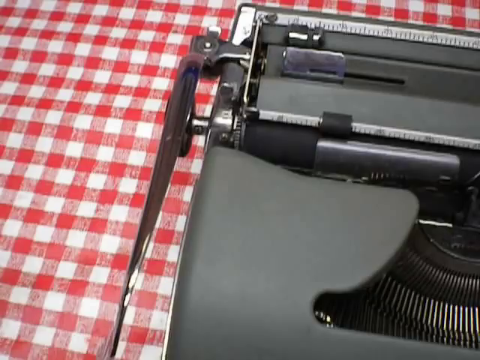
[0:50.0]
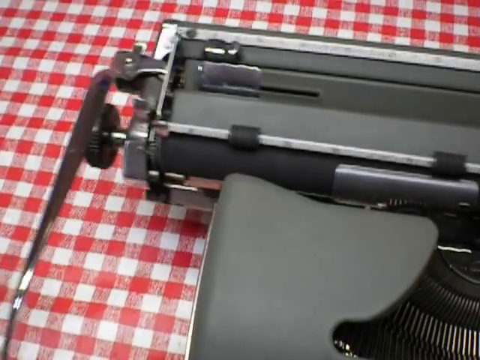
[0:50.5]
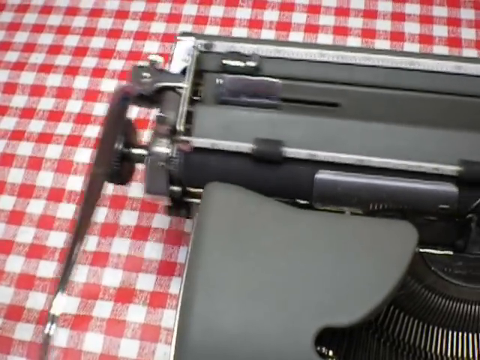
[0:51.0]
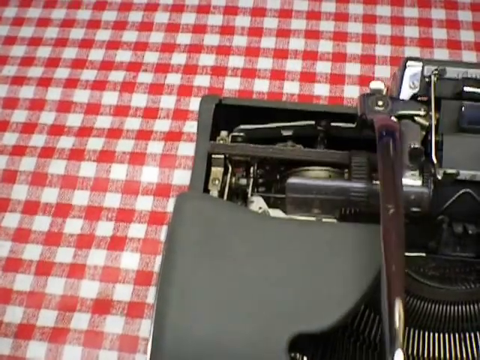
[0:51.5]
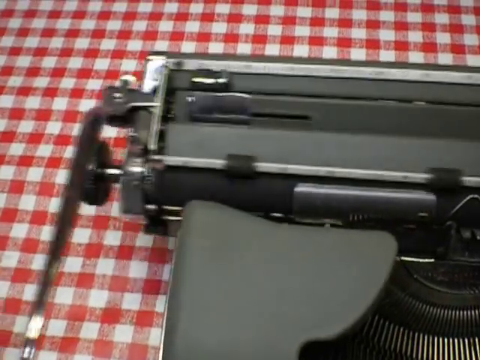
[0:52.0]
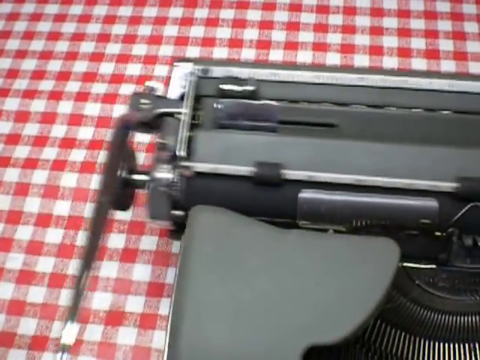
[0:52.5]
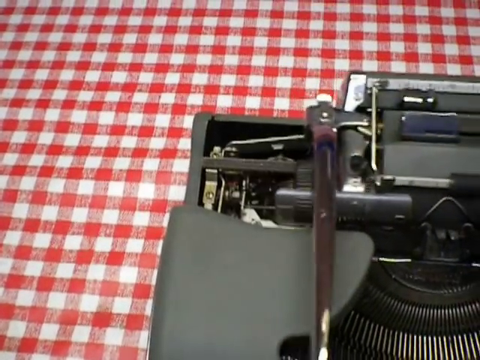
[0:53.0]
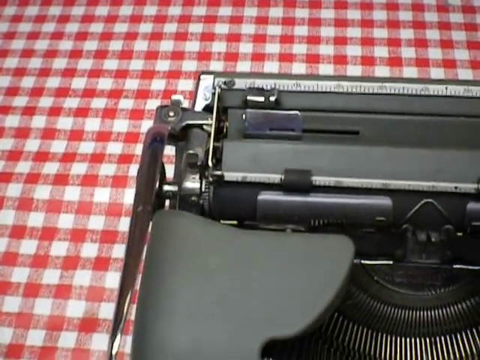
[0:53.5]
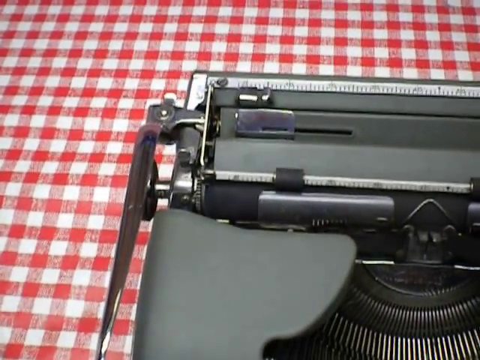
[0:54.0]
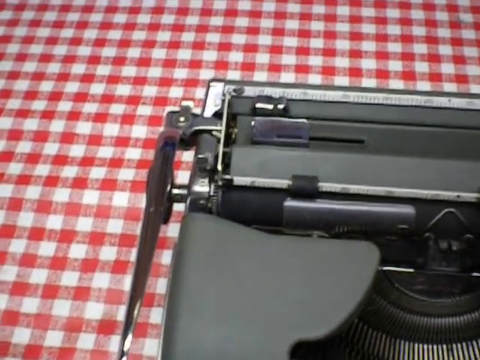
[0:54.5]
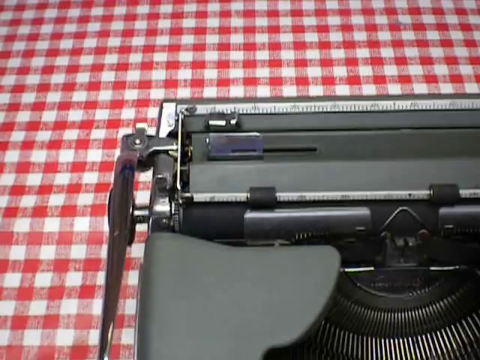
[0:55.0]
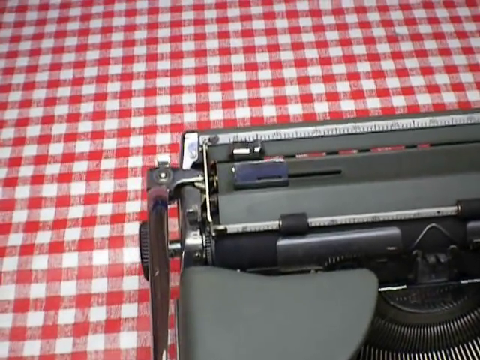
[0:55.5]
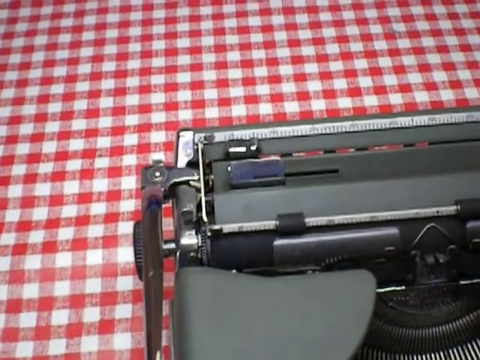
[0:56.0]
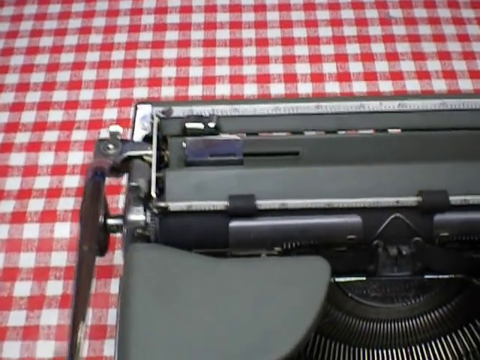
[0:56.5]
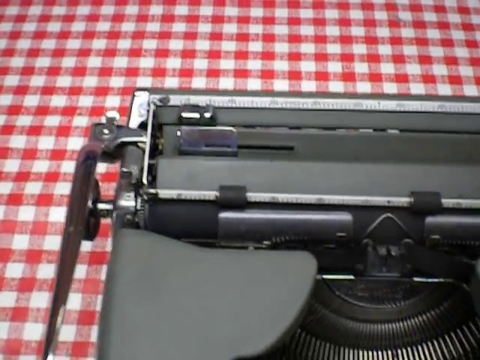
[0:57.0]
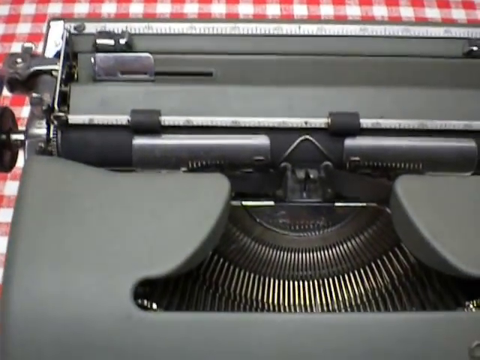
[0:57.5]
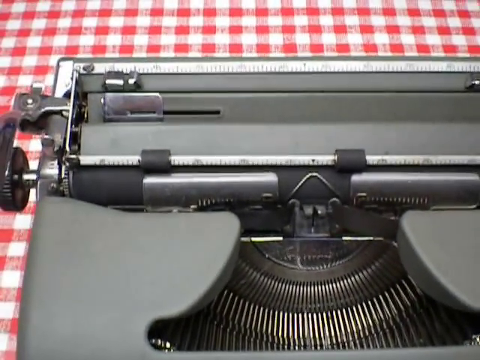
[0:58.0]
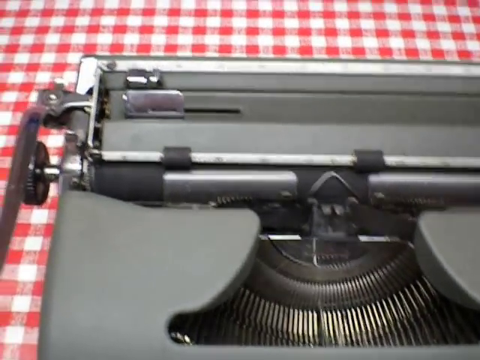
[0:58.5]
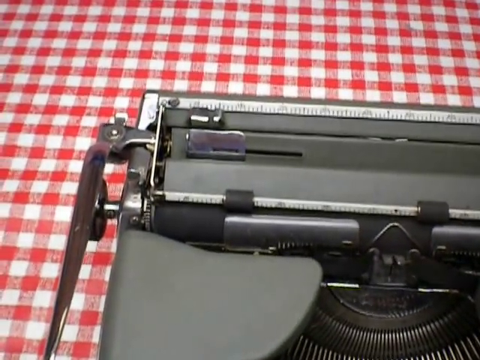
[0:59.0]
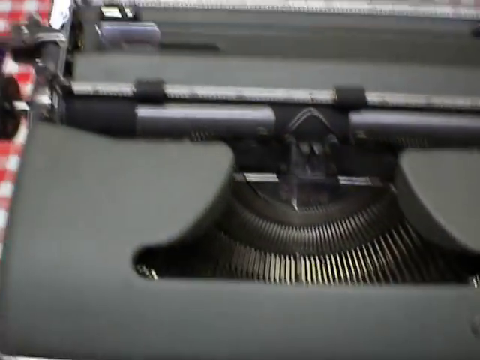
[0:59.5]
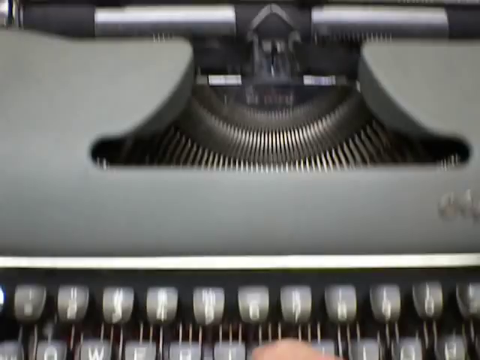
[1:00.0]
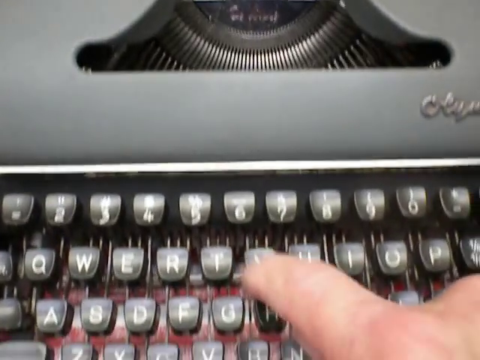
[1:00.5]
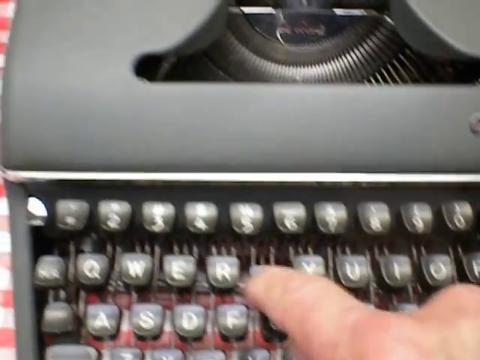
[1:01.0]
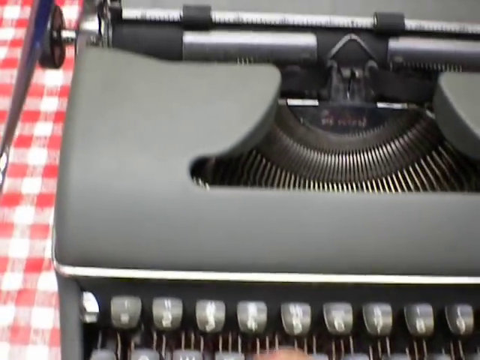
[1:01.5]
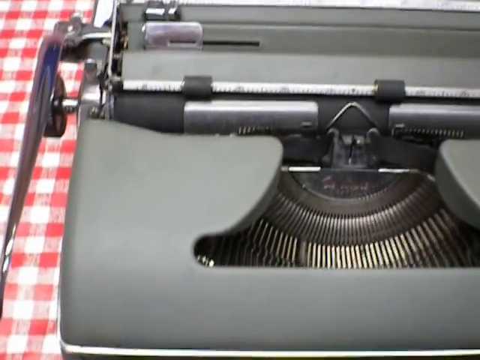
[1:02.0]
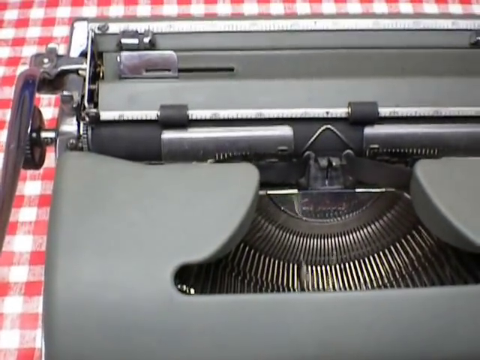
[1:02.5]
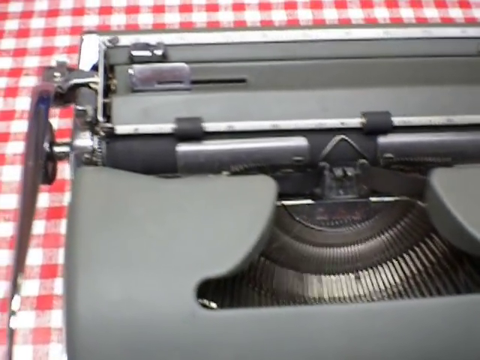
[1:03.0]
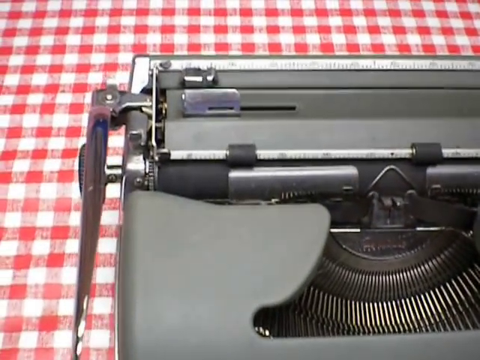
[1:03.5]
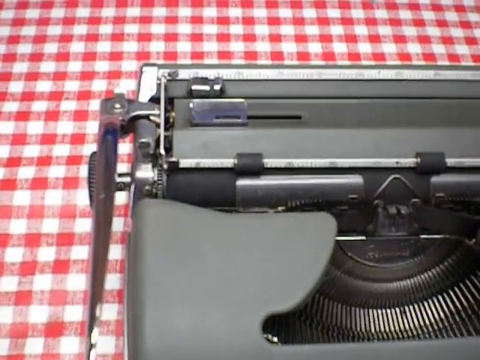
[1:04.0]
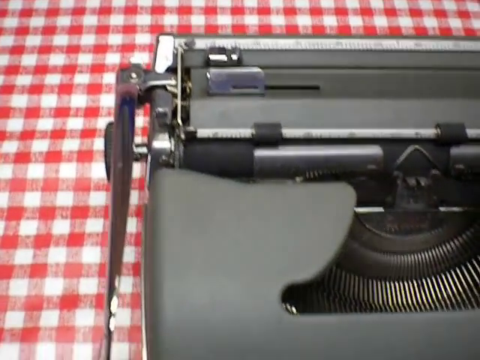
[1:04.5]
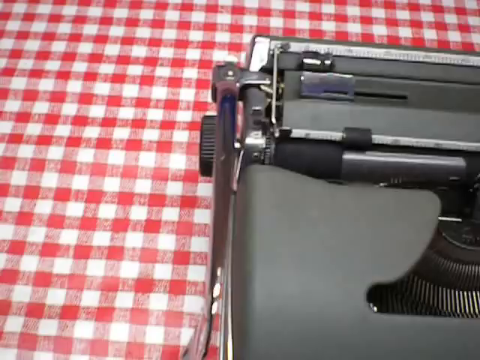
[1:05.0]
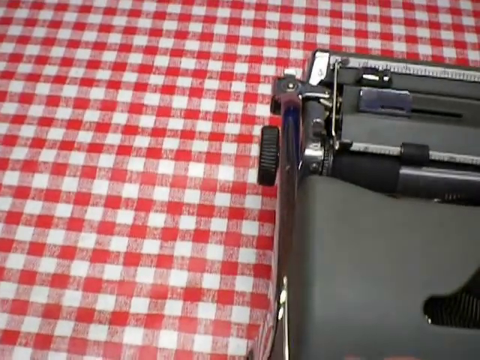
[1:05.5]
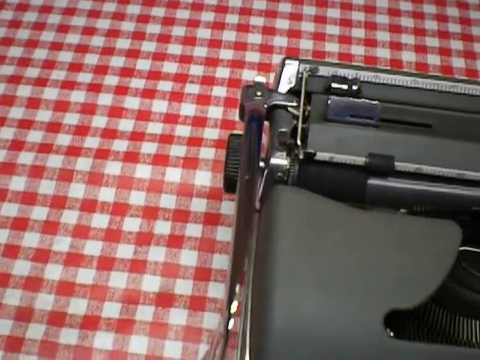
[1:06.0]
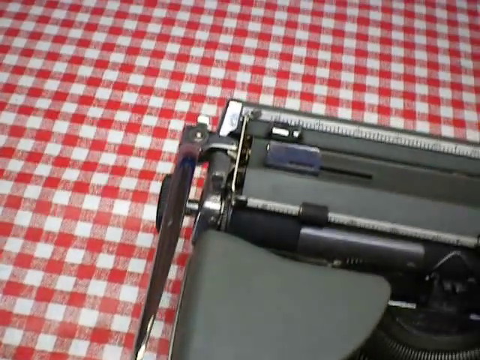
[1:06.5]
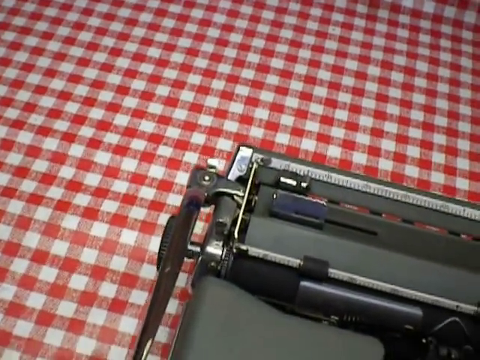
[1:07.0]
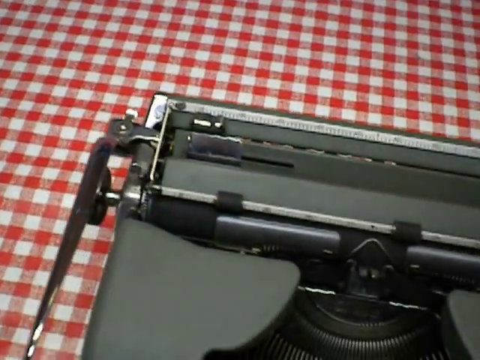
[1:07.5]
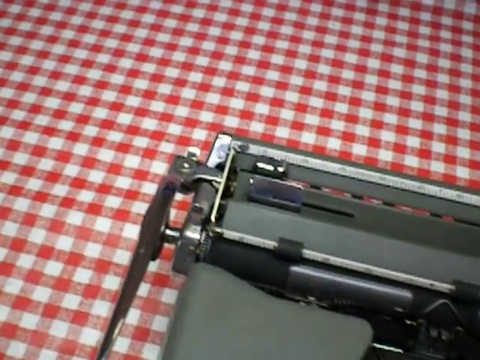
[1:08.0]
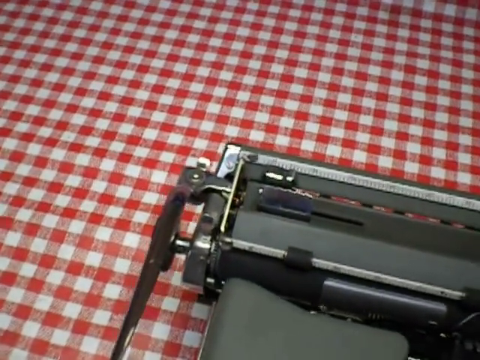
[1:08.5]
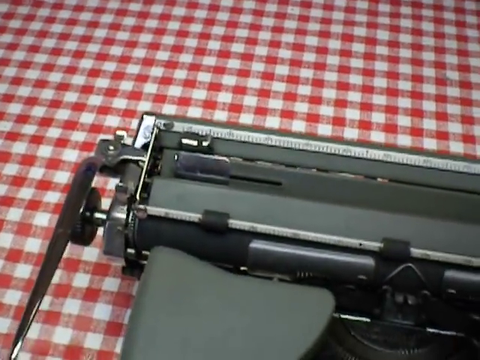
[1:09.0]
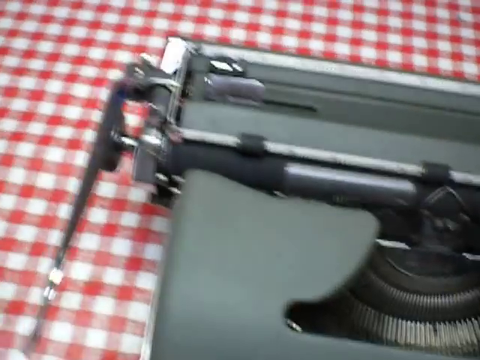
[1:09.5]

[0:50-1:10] On a vintage Olympia typewriter, the cylinder at the top moves back and forth three times and comes to rest in its original position. The silver strikers for the letters or numbers then move as a man's hand types the keys, pressing the T, the W and the R over and over. Various parts of the typewriter are visible, including keys with white letters or numbers on black keys and a slate gray body. The typewriter sits on a table with a checkerboard tablecloth of small red and white squares. The whole typewriter is never shown, as the camera hovers over the upper left side of the typewriter for most of the shot.